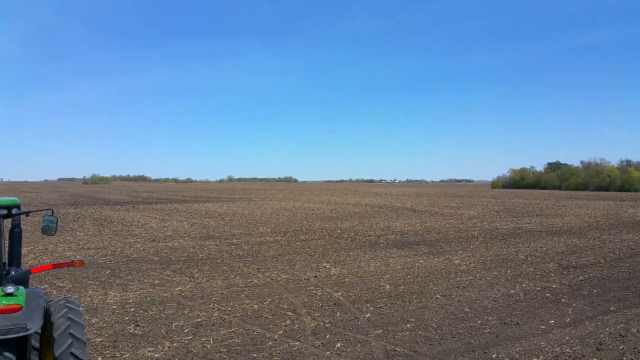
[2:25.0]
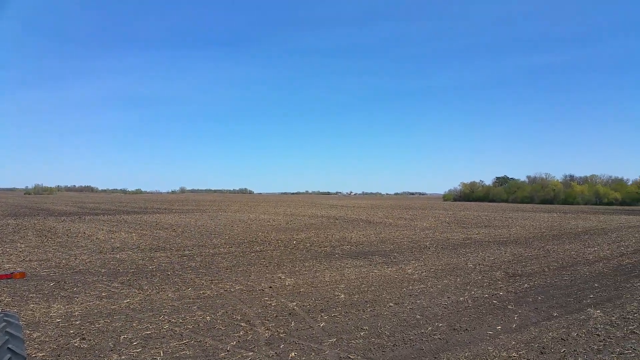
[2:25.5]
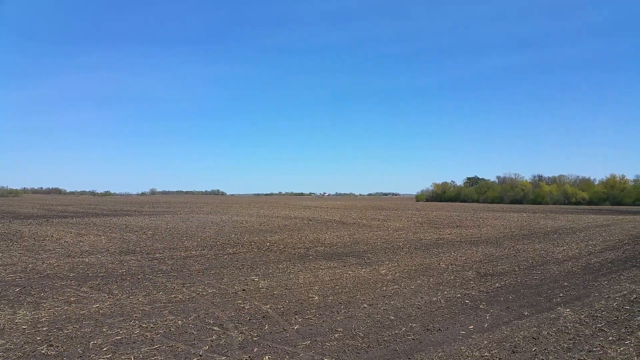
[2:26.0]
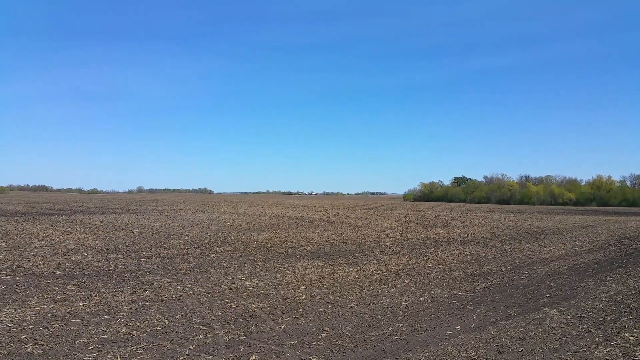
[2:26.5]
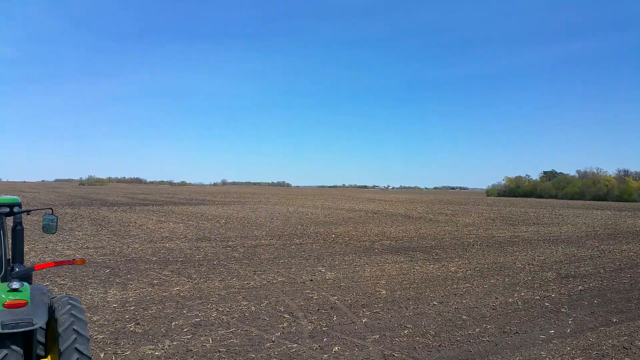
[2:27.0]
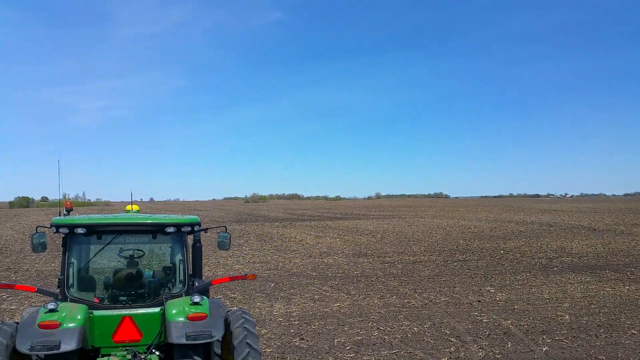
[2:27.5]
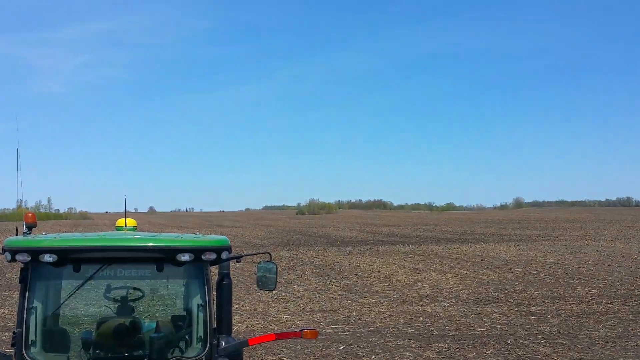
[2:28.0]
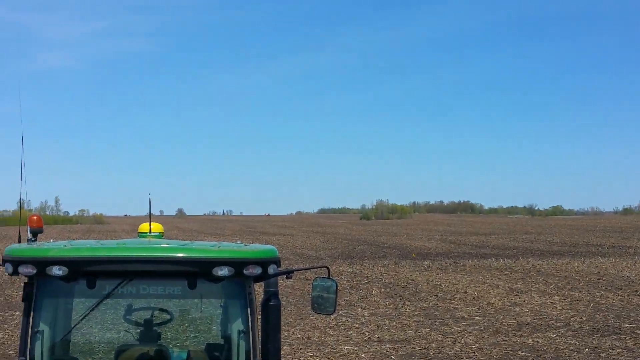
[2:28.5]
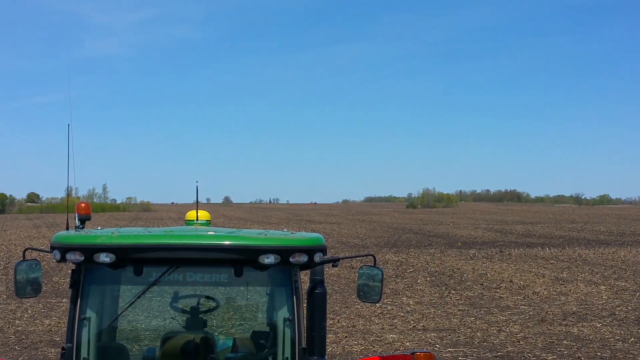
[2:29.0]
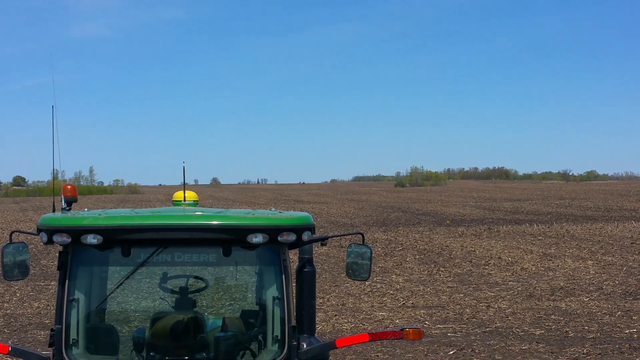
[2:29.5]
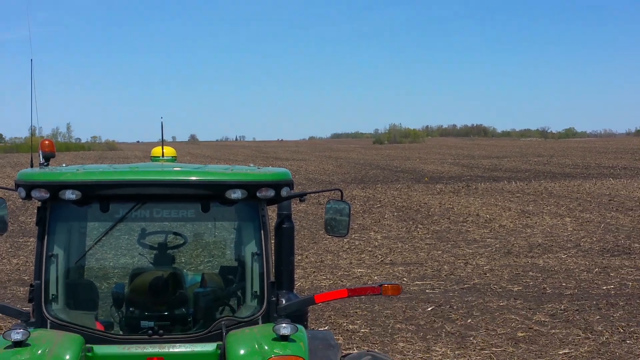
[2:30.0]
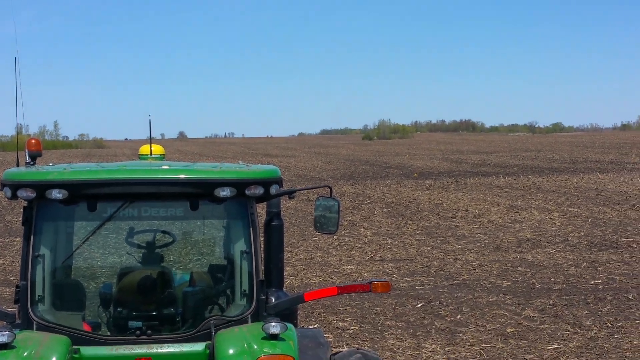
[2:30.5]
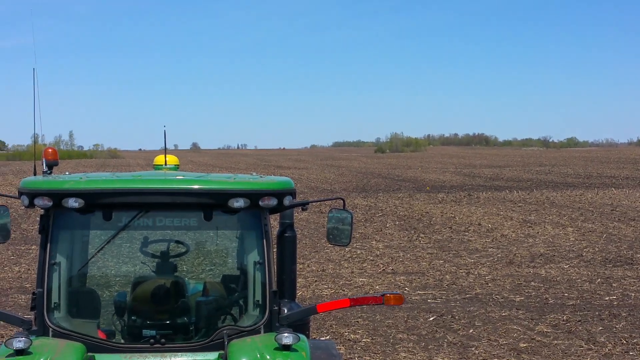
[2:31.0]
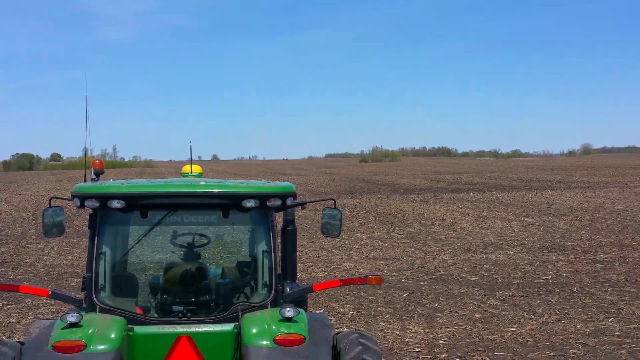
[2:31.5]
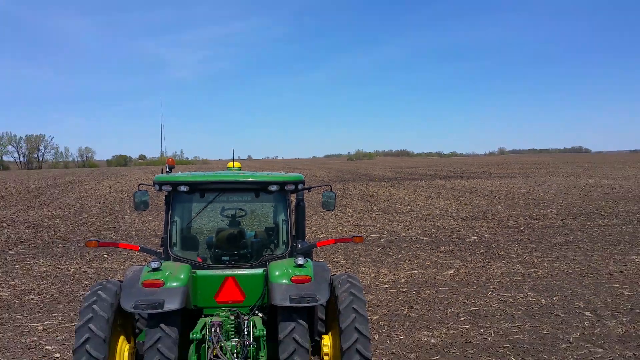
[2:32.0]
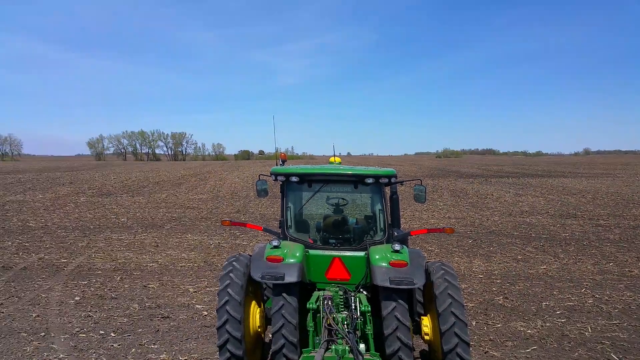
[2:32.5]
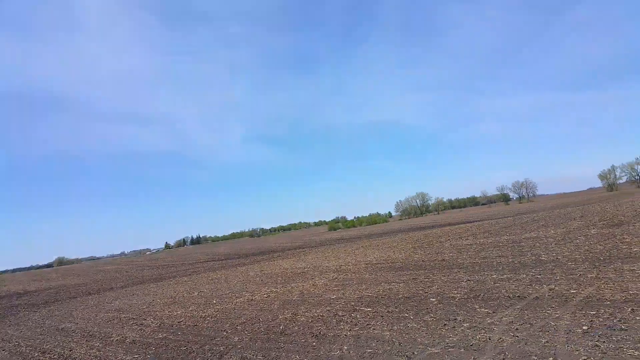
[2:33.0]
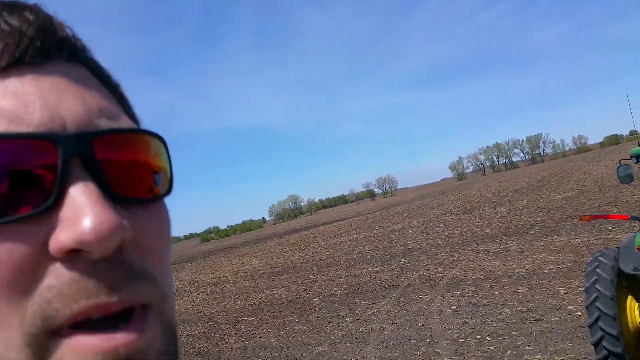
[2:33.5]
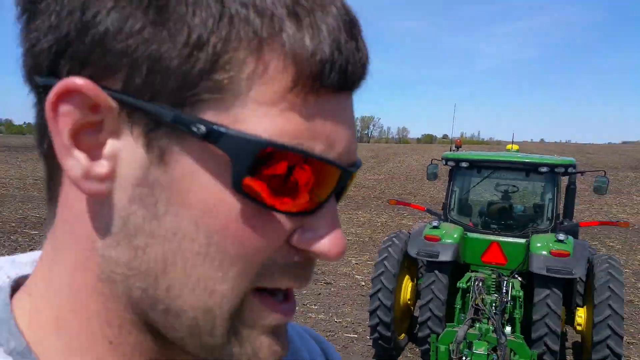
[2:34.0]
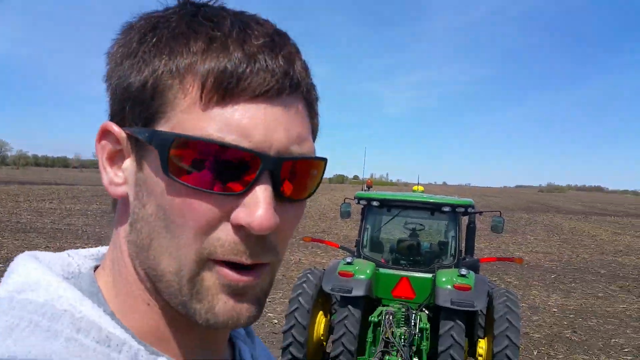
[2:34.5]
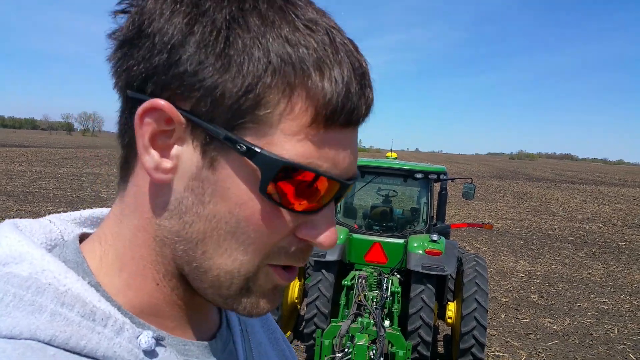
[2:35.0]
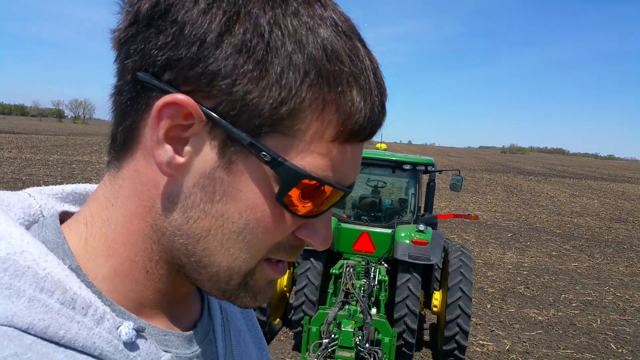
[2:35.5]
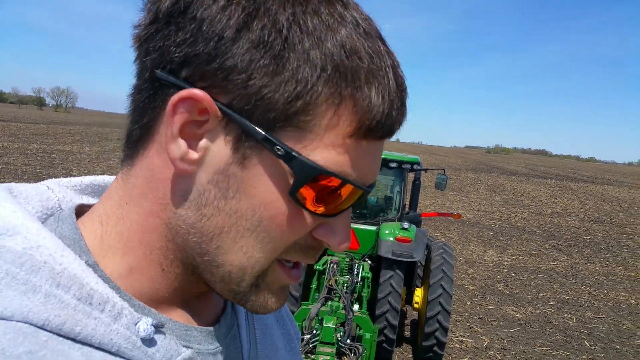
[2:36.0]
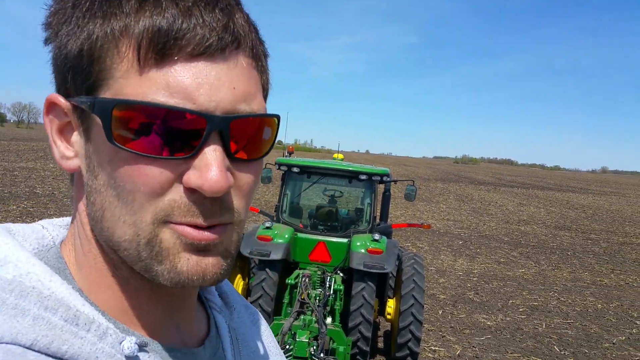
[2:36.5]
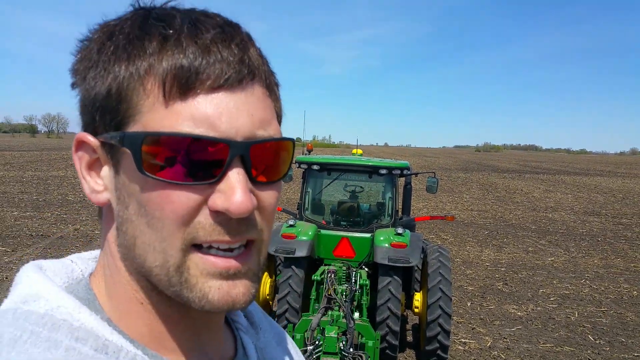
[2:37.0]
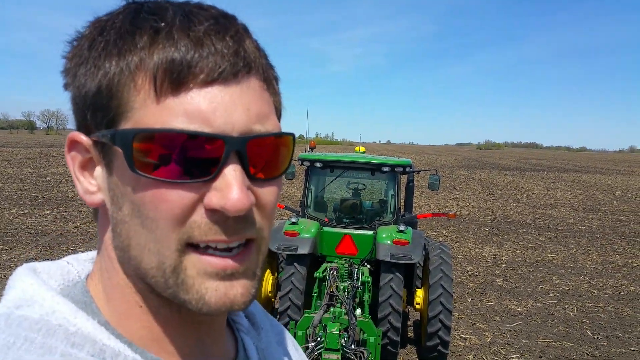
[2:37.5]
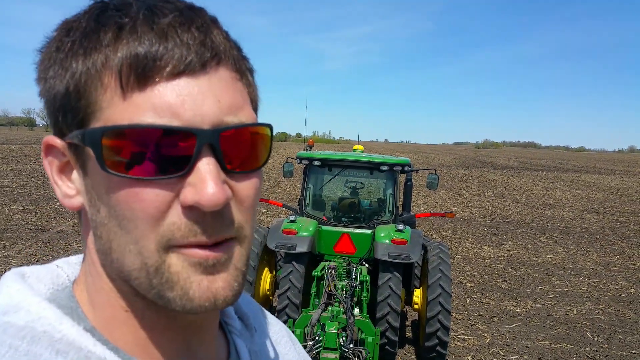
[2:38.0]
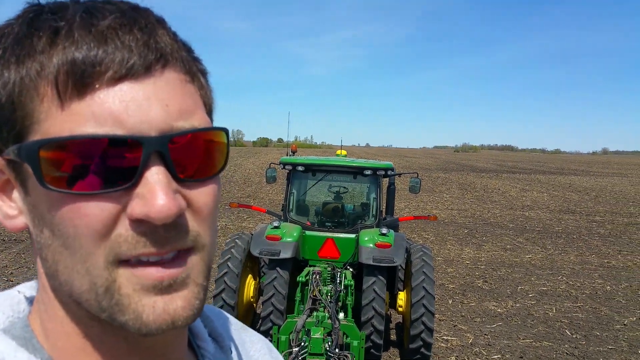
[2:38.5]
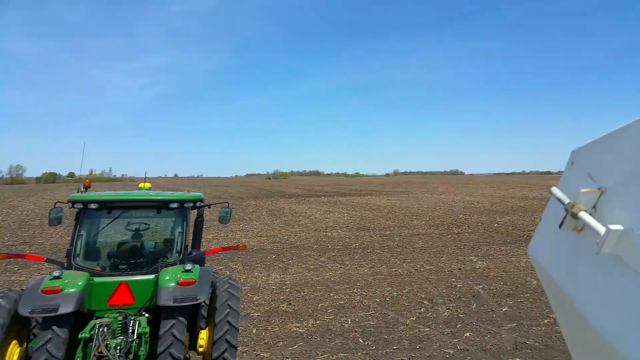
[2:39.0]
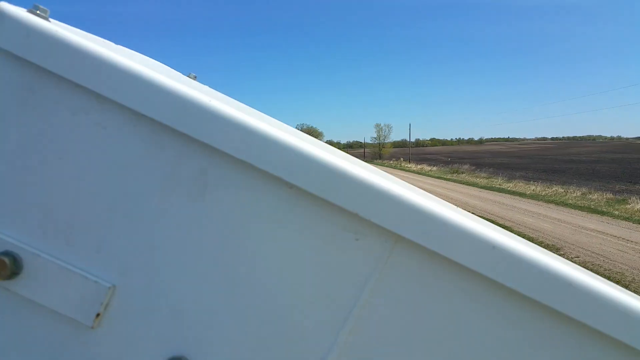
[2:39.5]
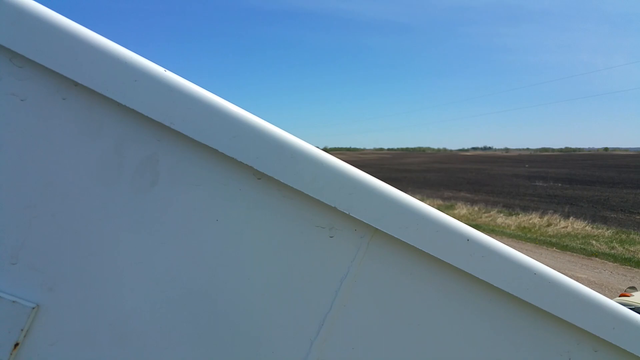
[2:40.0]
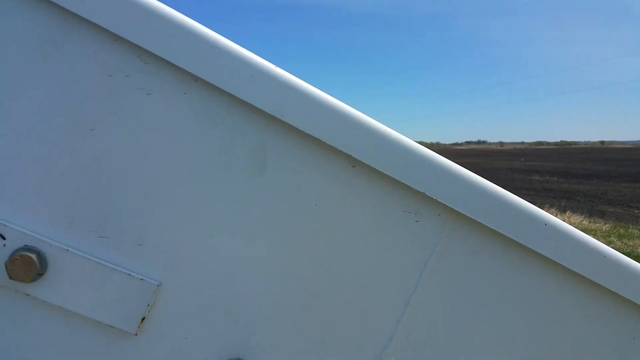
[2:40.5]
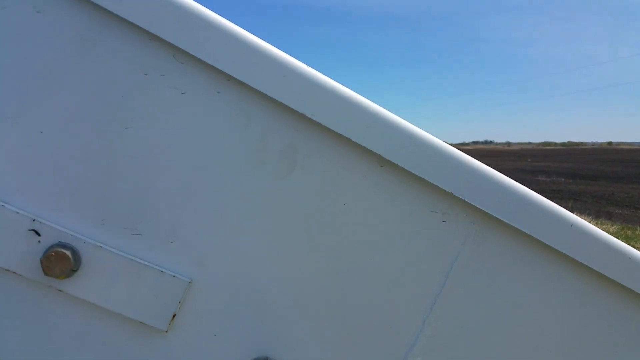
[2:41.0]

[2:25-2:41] The camera looks around the empty field, then turns to the agricultural vehicle that pulls the planter into the field, with the John Deere logo visible inside the windshield. The camera zooms out of the field, and the man turns the camera to his face. It is the same Caucasian man with the red and orange tinted glasses and black frames; he talks to the camera, looks down, then looks back at the camera, still talking. He then turns the camera back to the white chute that feeds the seeds into the yellow container.